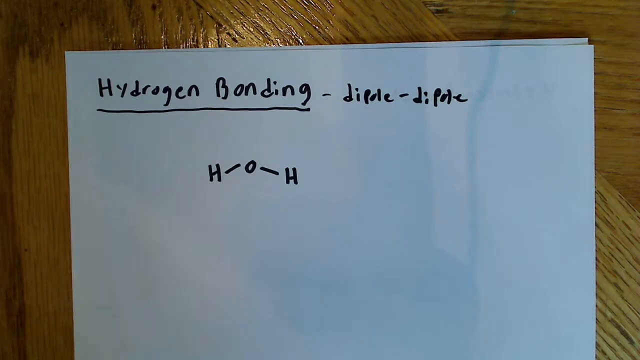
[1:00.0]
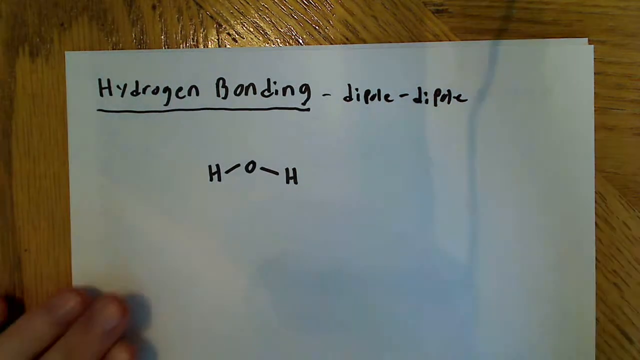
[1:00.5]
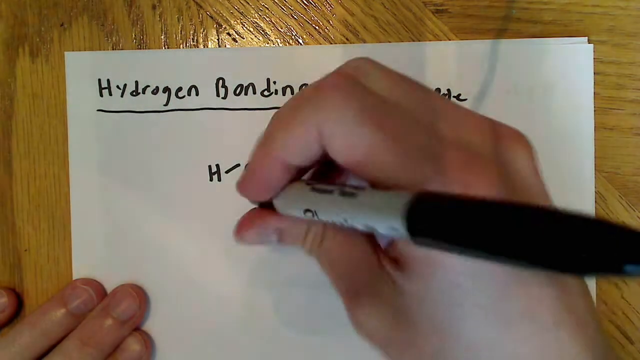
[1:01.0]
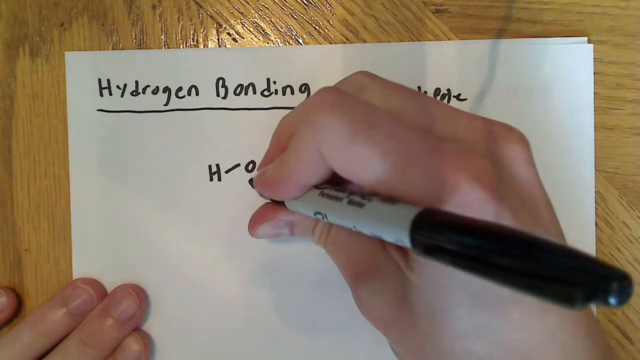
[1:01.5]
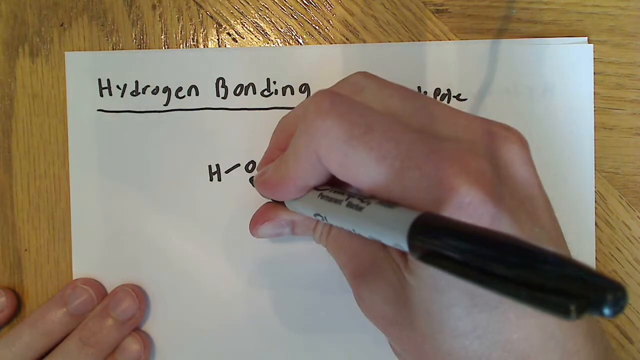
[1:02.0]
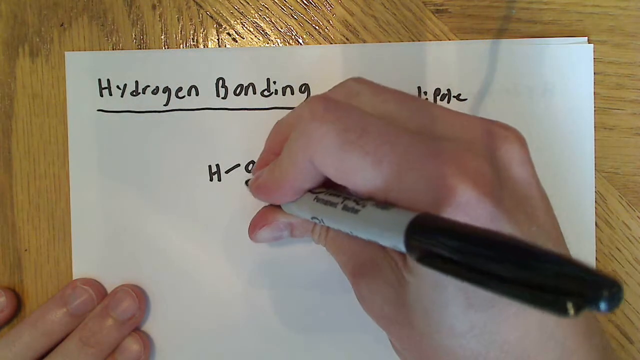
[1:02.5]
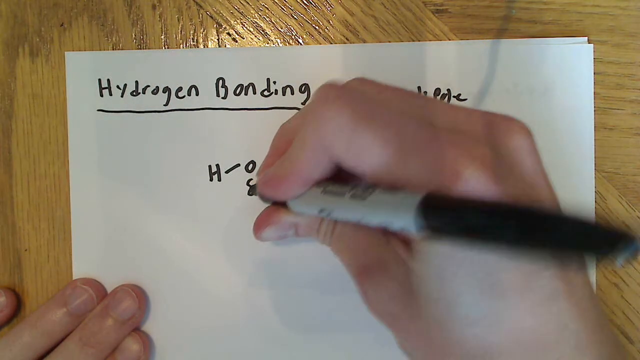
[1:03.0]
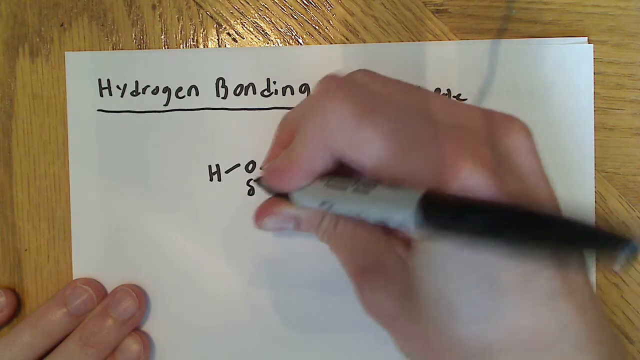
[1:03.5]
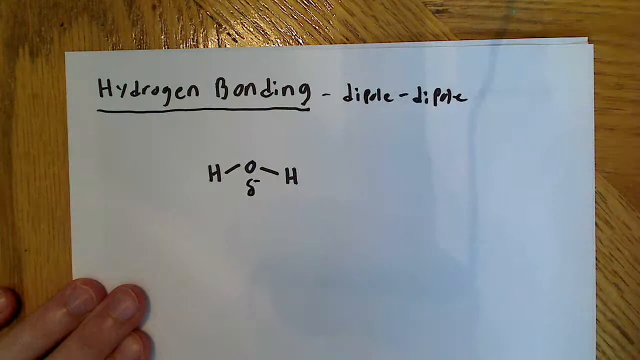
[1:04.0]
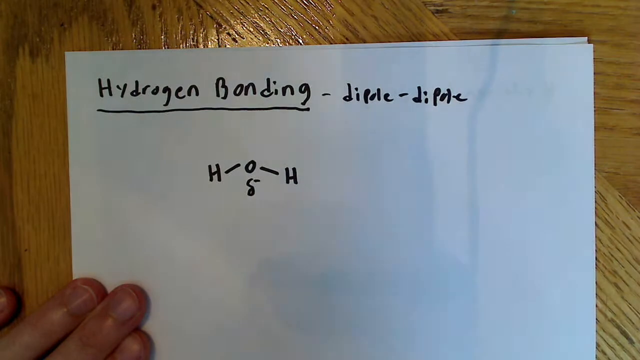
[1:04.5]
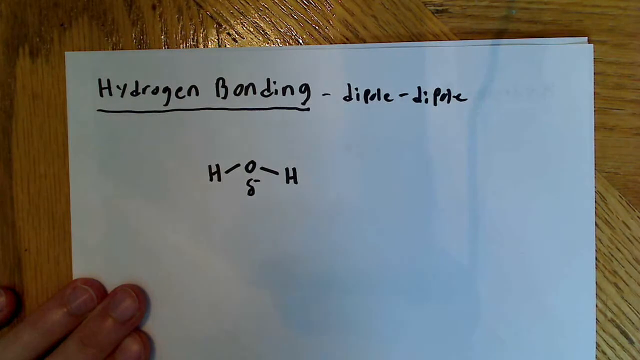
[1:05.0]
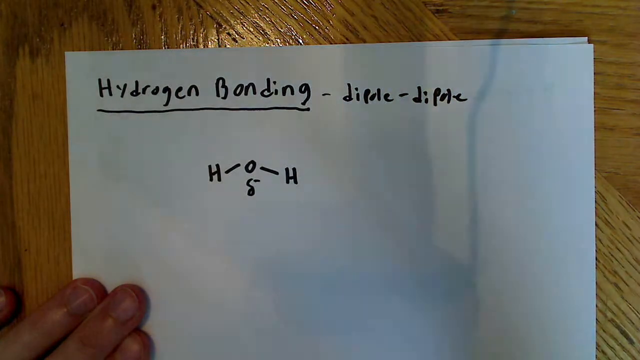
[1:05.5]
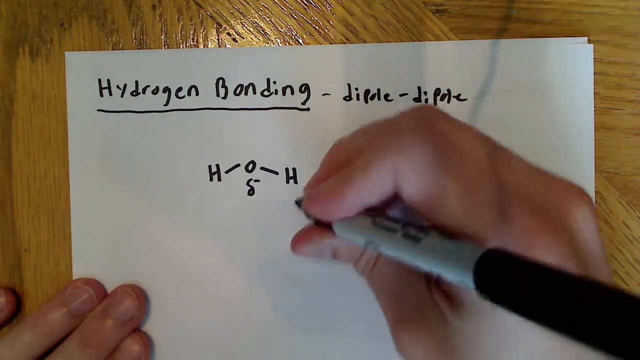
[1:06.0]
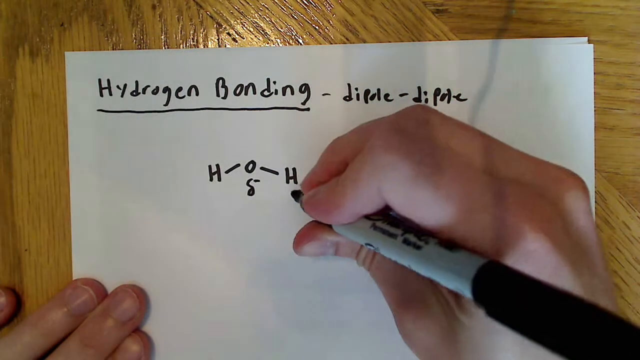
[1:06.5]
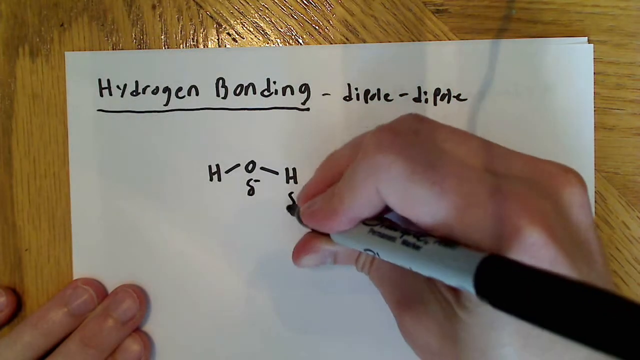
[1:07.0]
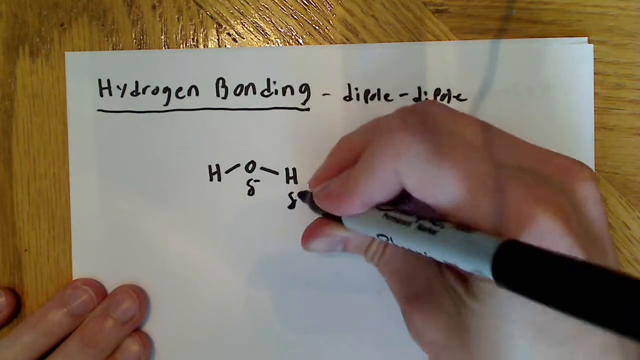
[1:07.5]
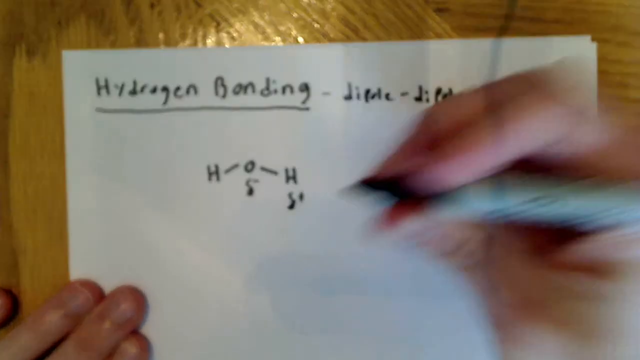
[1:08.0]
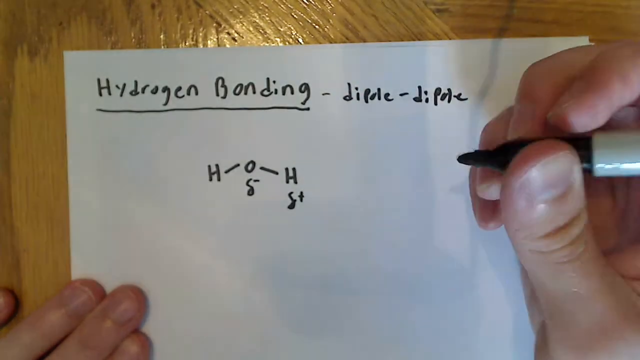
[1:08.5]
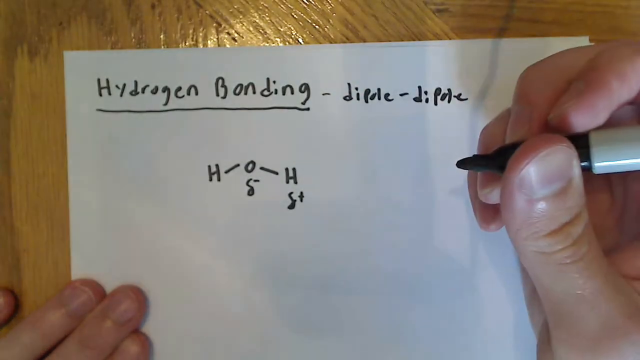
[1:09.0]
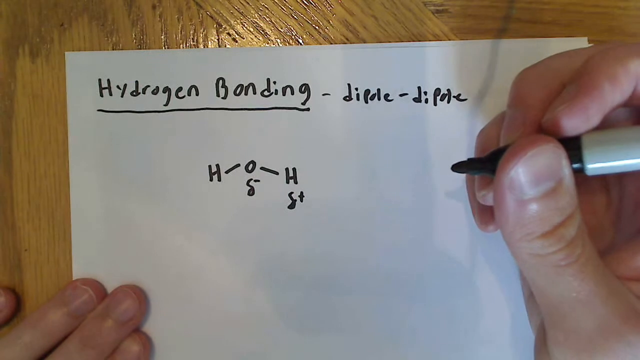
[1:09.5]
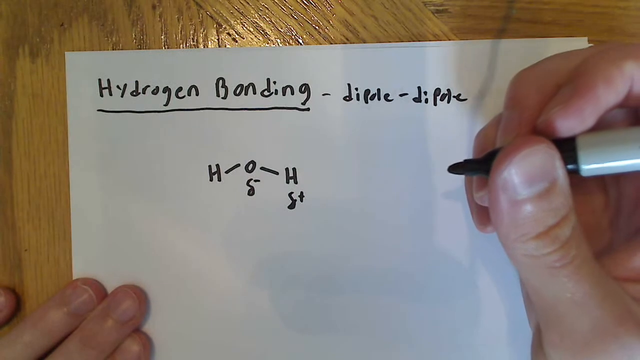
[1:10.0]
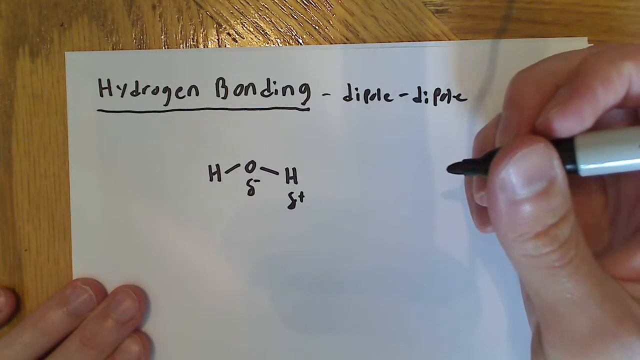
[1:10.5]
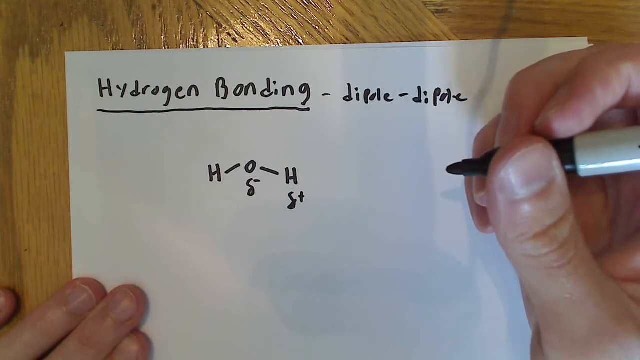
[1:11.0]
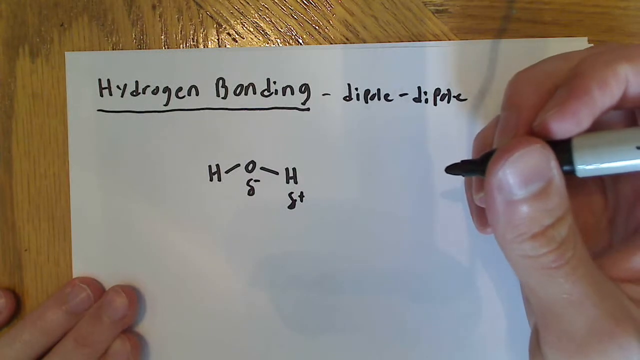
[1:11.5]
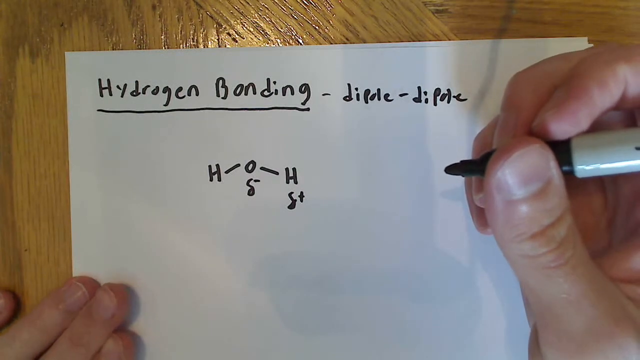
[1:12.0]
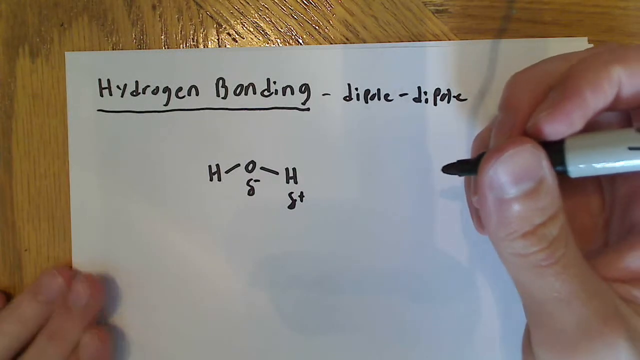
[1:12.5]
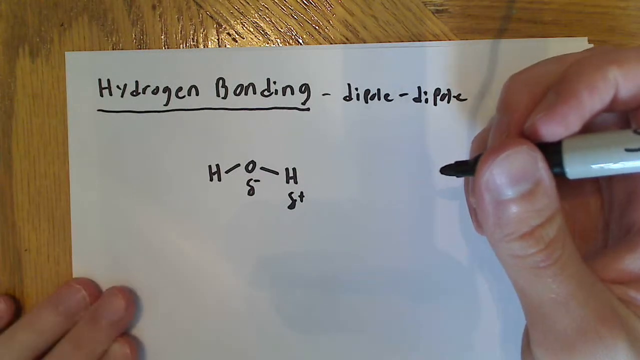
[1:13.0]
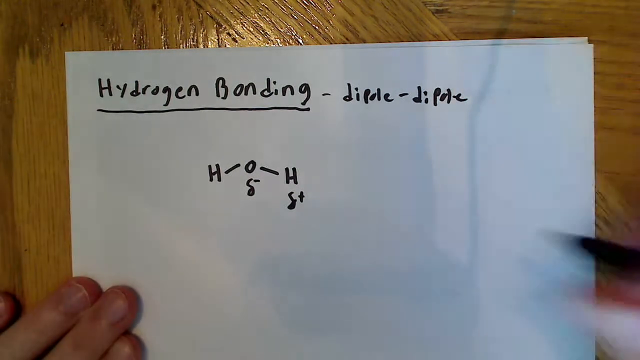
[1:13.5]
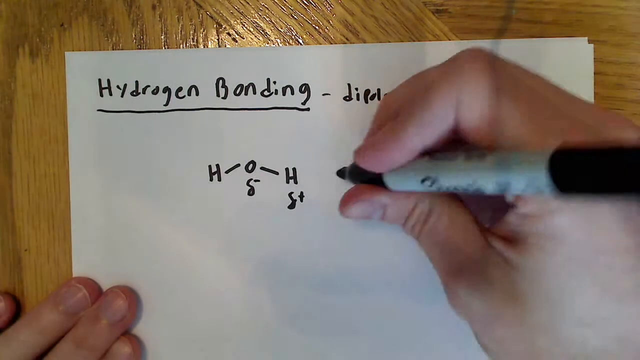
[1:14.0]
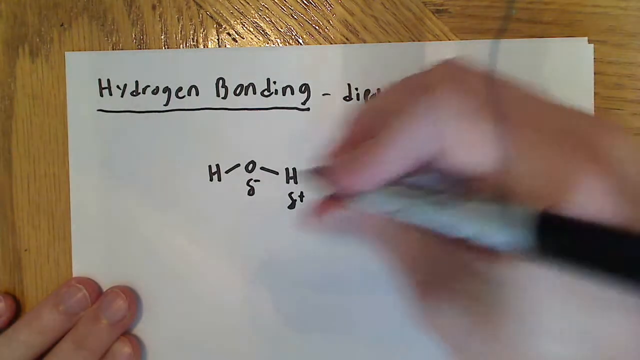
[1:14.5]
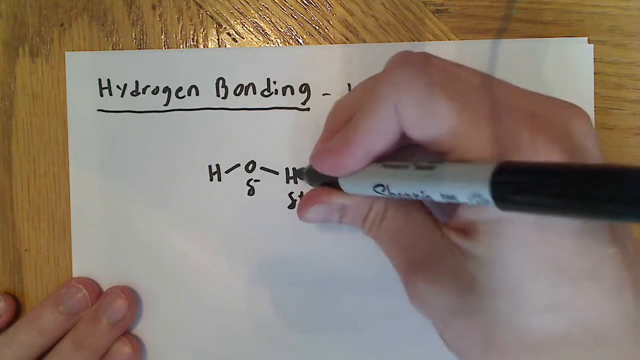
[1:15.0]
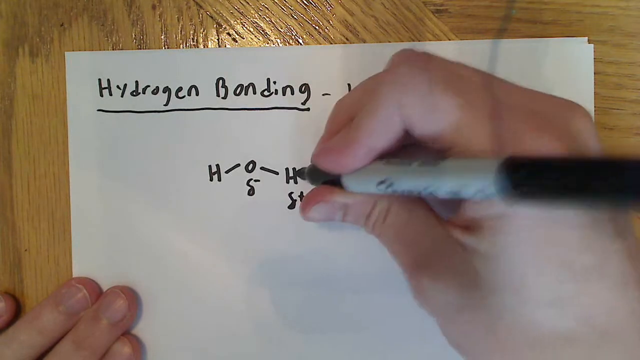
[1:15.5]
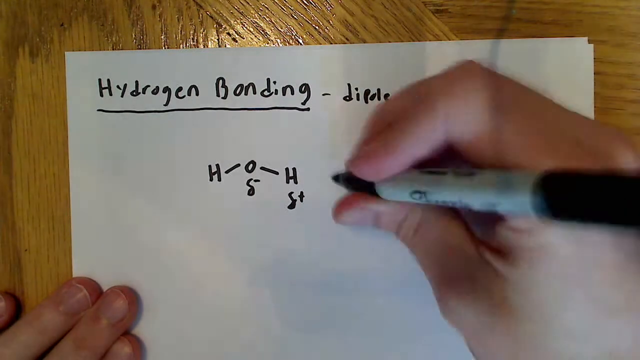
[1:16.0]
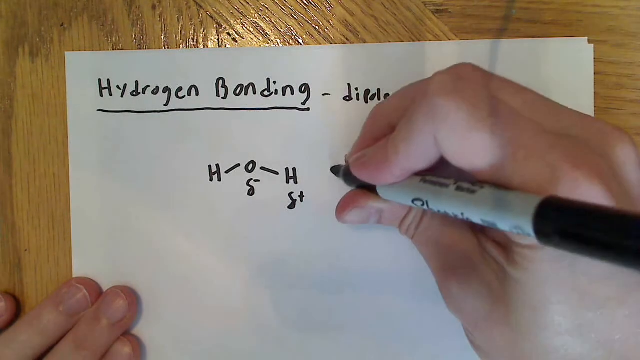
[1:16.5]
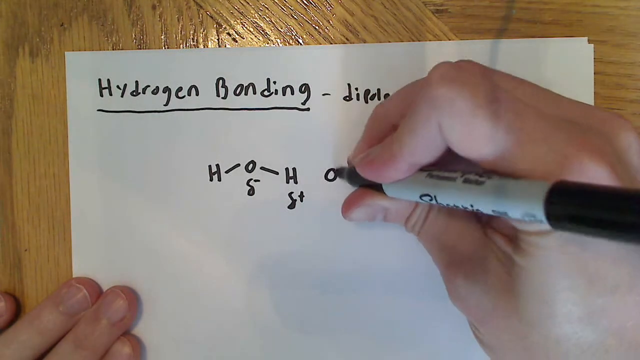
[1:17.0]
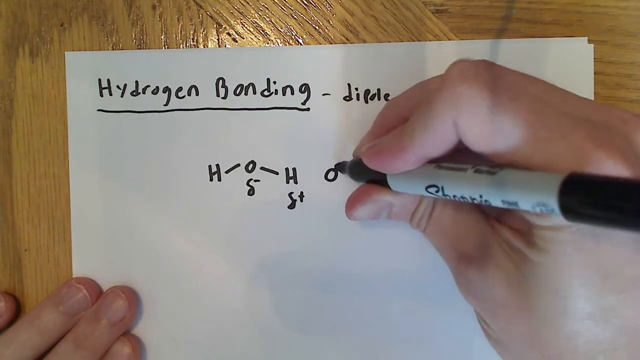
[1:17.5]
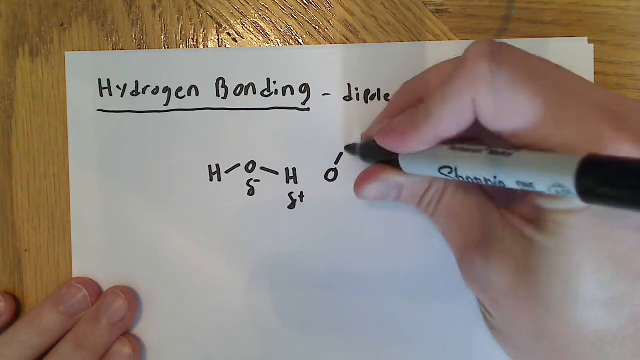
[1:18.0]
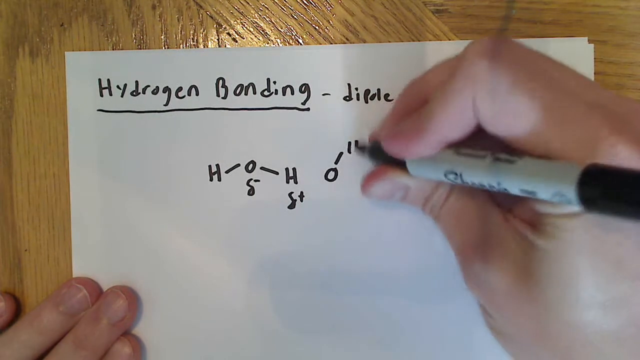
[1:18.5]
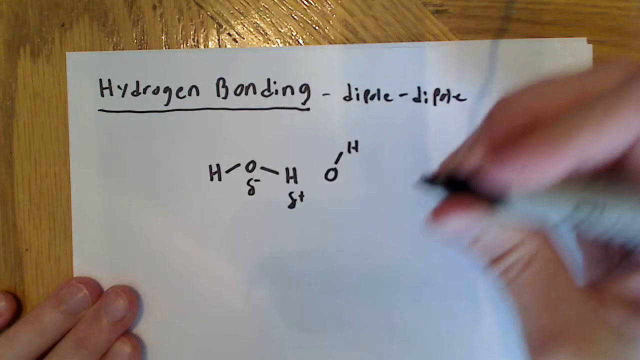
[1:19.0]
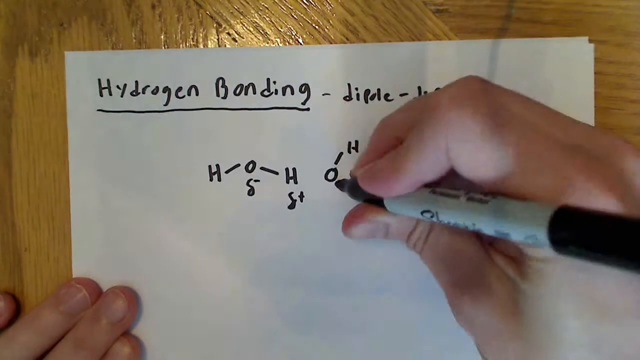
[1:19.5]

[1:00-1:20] Two stacked pieces of white printer paper lie on a brown, heavily grained wooden table with a shiny finish. Only the top sheet is readable, though there might be something written on the bottom one, as a little shading shows through the top page. At the top left, "hydrogen bonding" is written in Sharpie with the H and B capitalized and the rest lowercase, underlined, followed by a dash, the word "dipole," another dash, and "dipole" again. Beneath is a diagram of a capital H, a slight dash going up and to the right to a capital O, and a slight dash going down to the right to a capital H. Two hands of a white person with short fingernails come in; the left hand holds the page down and the right hand, holding a Sharpie, starts writing beneath the diagram. Beneath the O it writes what looks like a Greek lowercase delta with a minus sign, and underneath the H a Greek lowercase delta with a plus sign, though these might also be an S. To the right of the diagram, after a slight pause, the person starts another diagram: a capital O, a slight dash going up, a capital H, and a slight dash going down to the right, and then begins drawing another letter.